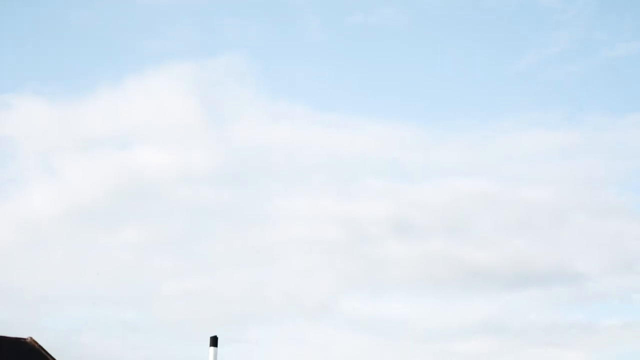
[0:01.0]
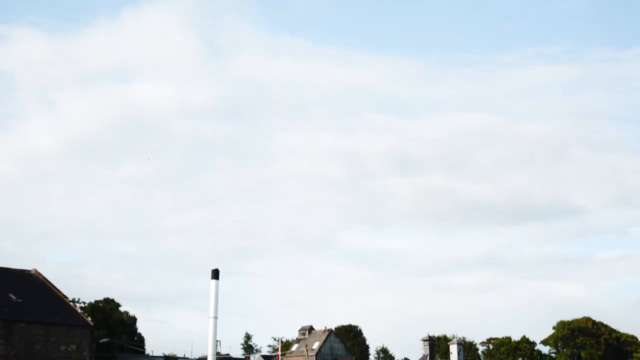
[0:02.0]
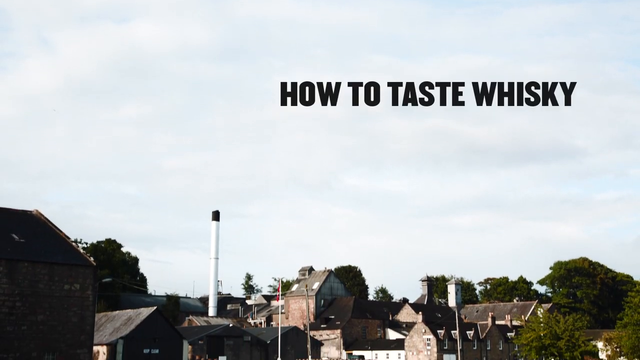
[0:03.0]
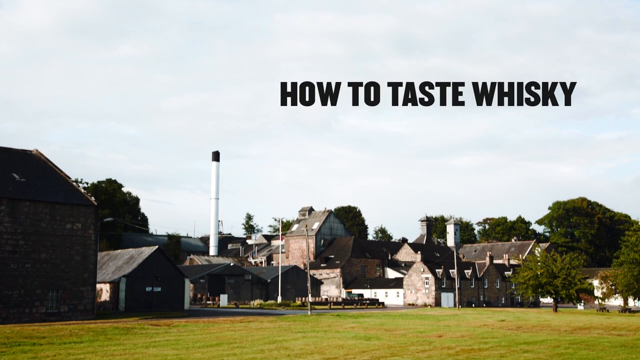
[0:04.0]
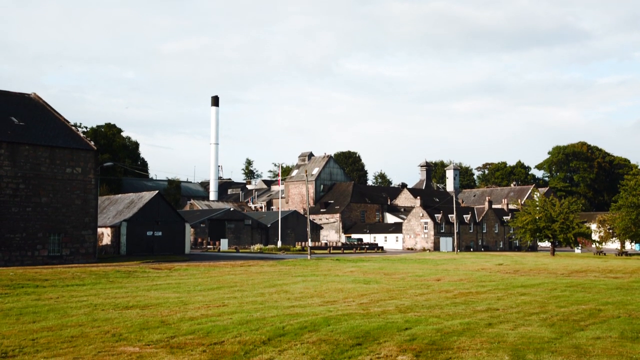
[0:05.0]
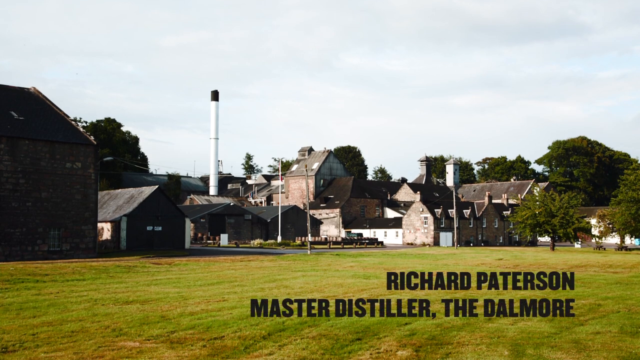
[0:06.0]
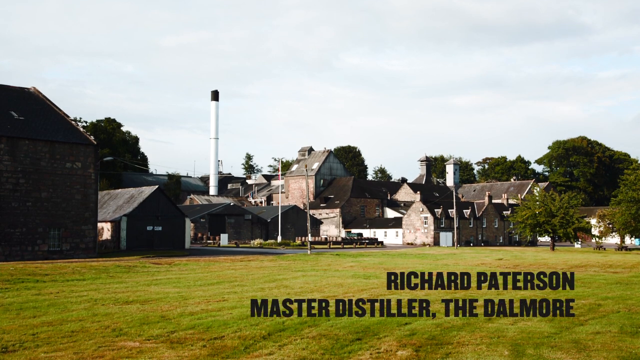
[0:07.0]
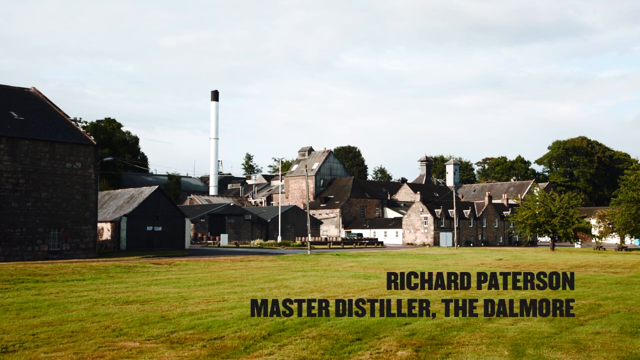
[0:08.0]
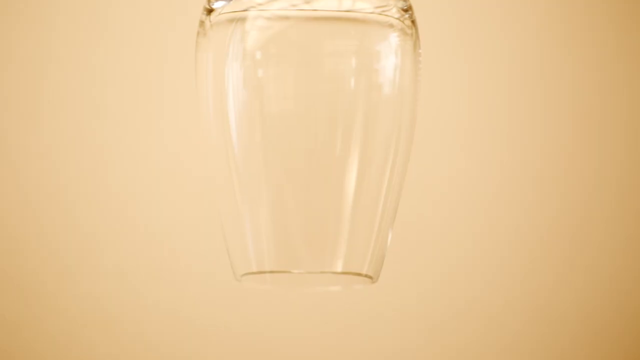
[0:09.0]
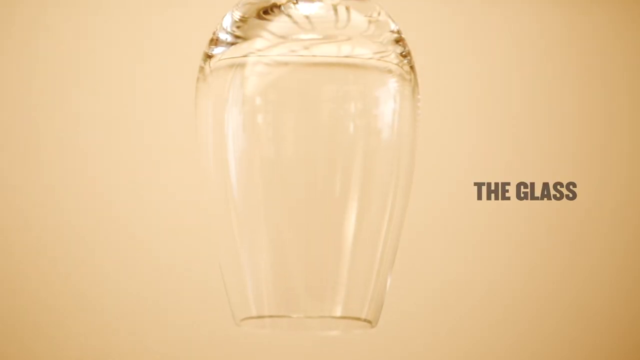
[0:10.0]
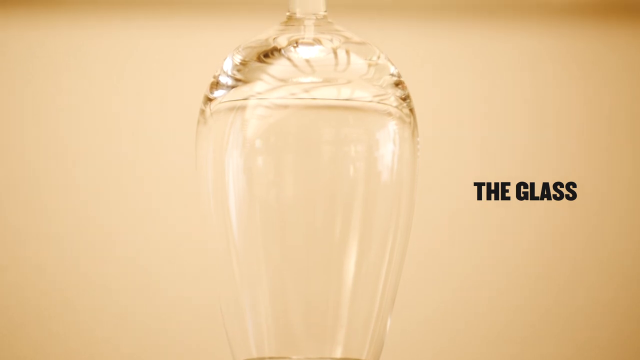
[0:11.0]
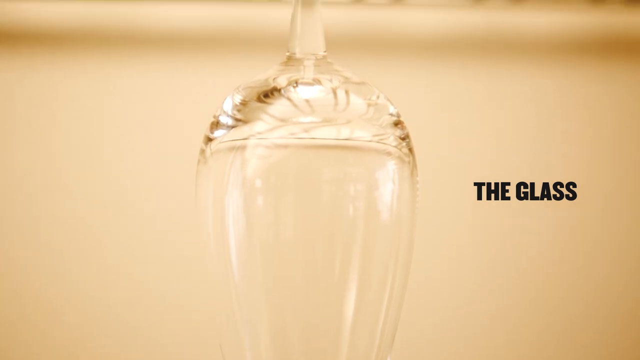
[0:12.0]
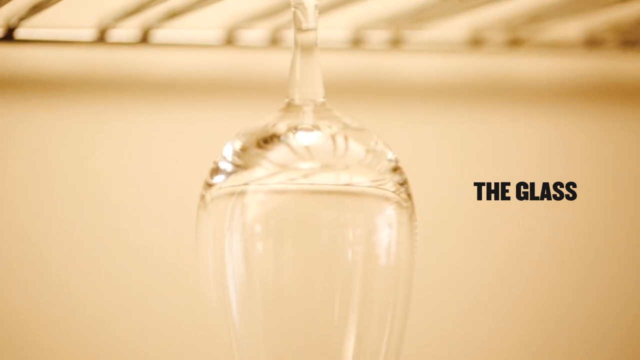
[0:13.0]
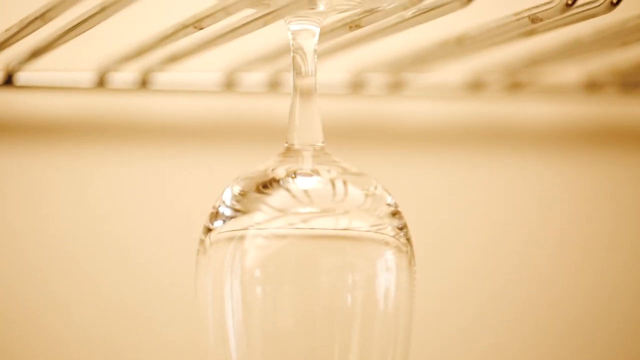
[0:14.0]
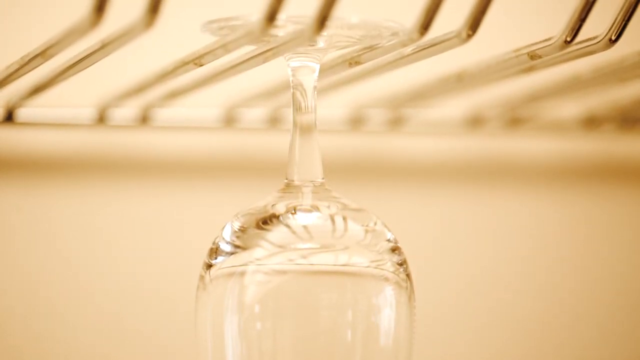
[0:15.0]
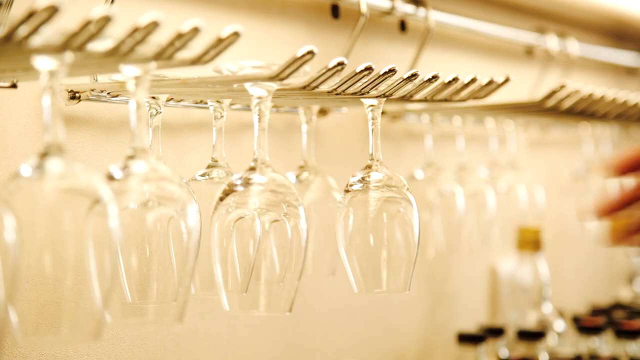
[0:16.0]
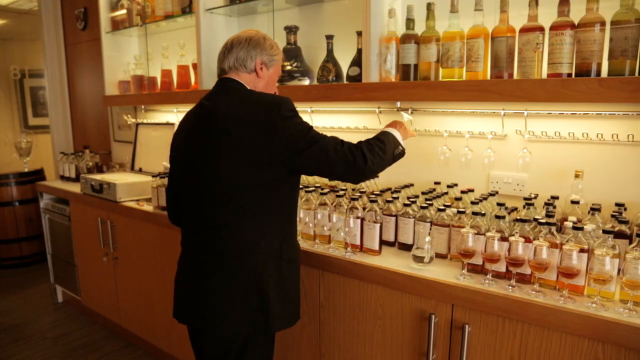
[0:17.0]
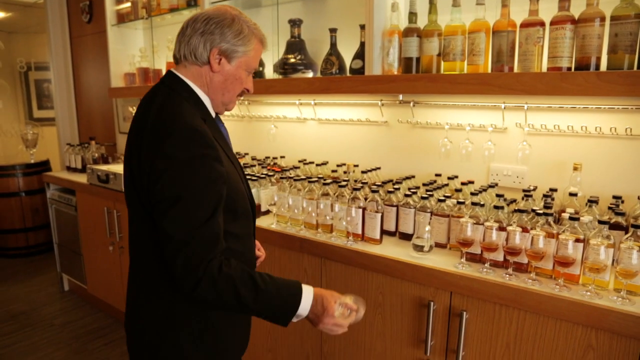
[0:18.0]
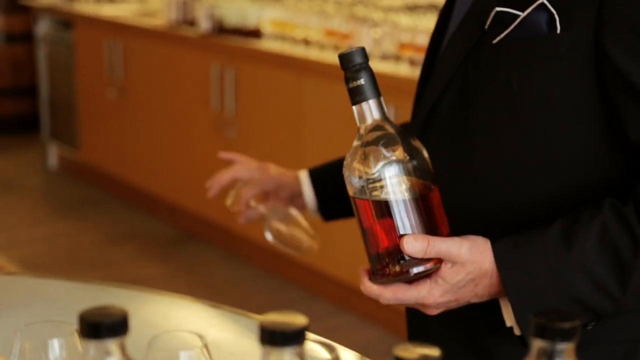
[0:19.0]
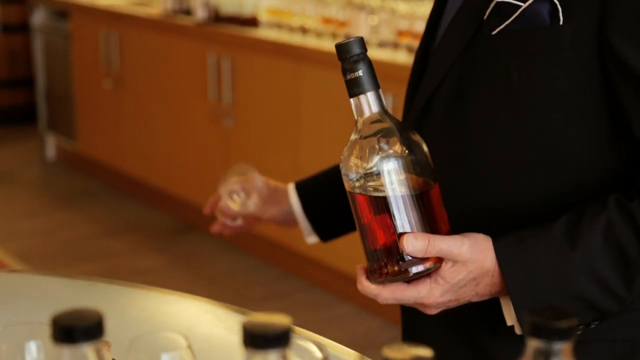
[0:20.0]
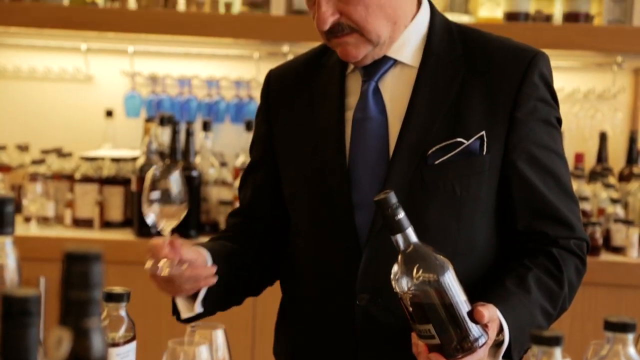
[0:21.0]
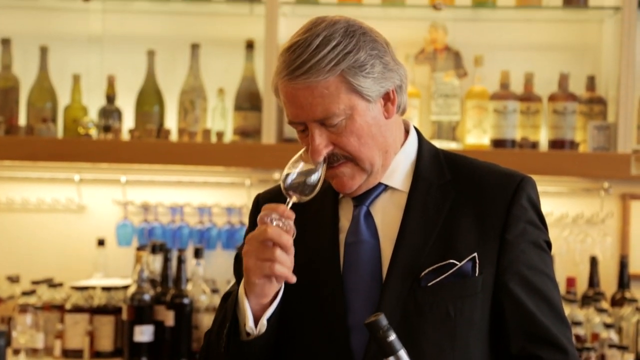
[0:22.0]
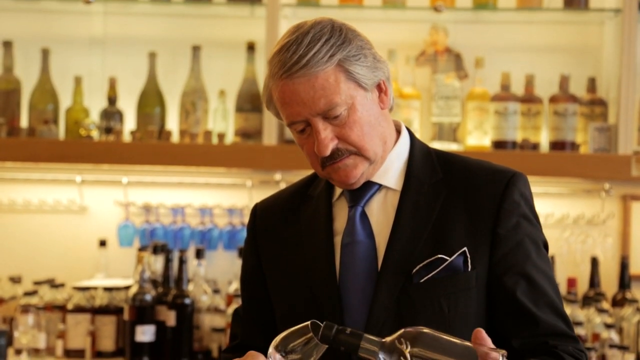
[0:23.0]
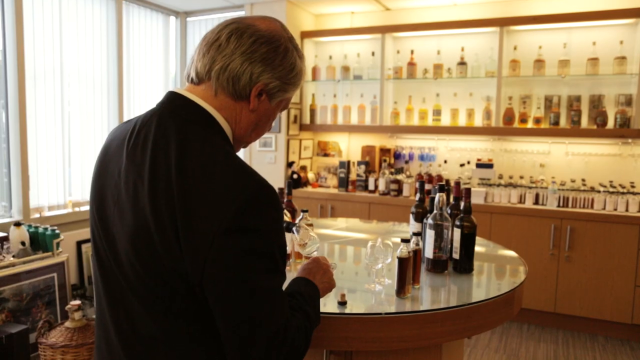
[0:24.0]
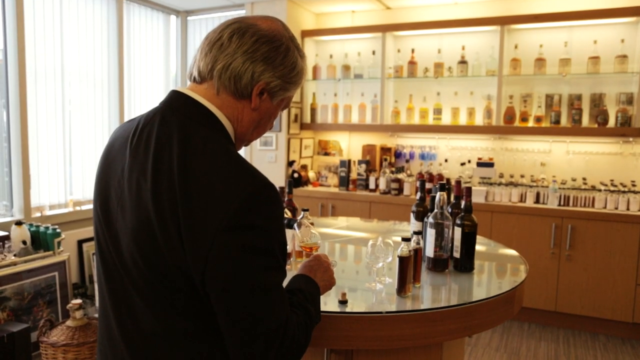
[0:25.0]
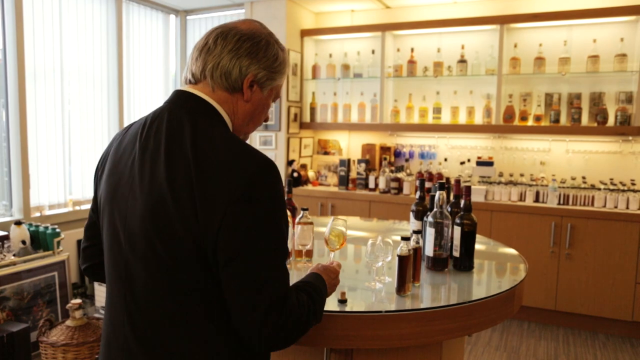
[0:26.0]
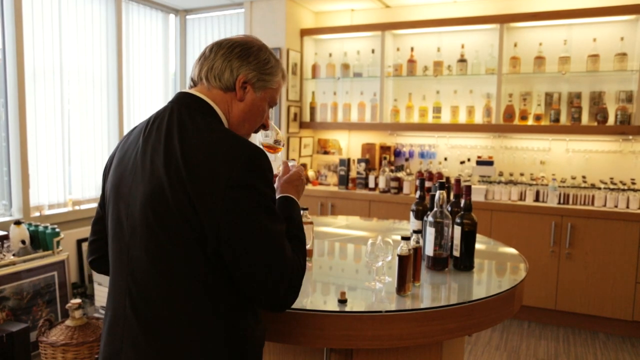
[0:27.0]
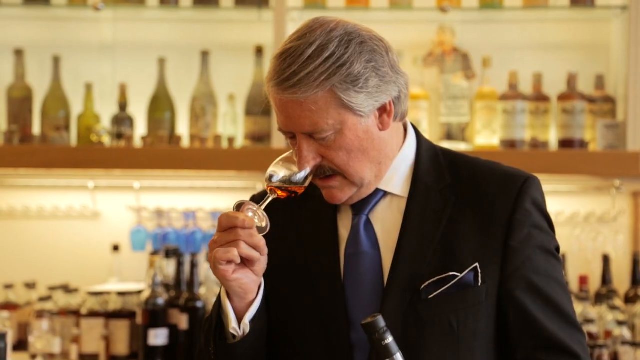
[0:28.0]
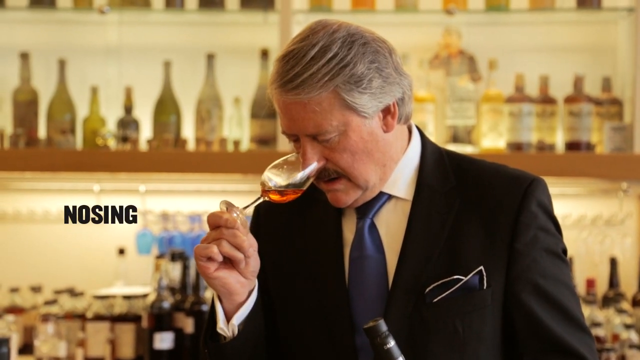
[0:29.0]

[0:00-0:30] The setting is a professional whiskey tasting room, with the master whiskey taster Richard Patterson, the master distiller of the Dalmore. The tasting starts with the glass: a little whiskey is put in, swirled, and the whole nose is put into the glass, which covers the nose. Sticking the nose in this way is called nosing.